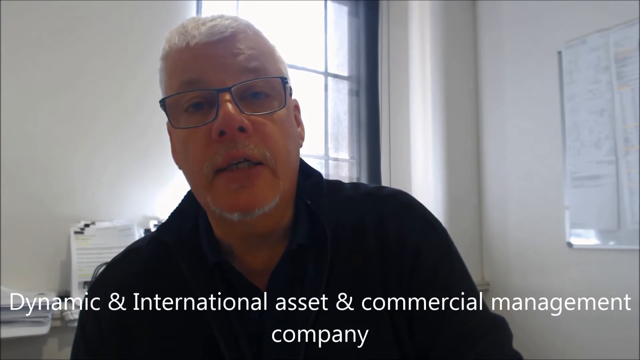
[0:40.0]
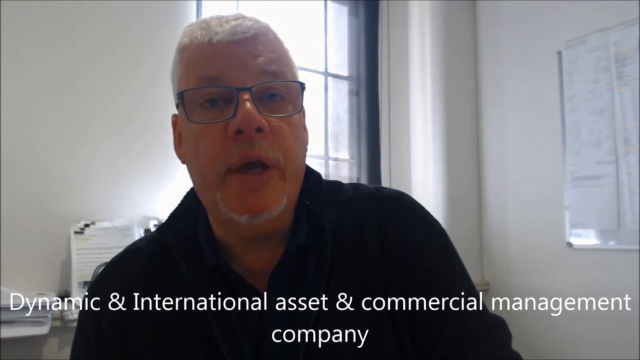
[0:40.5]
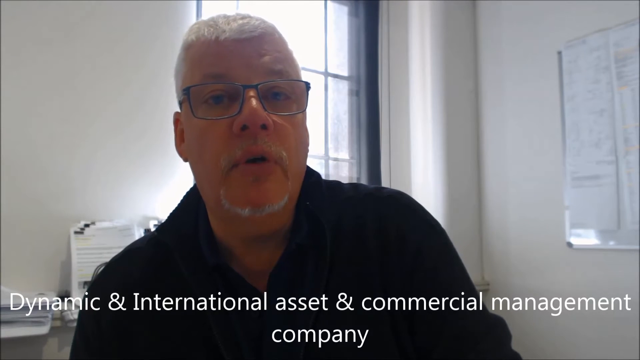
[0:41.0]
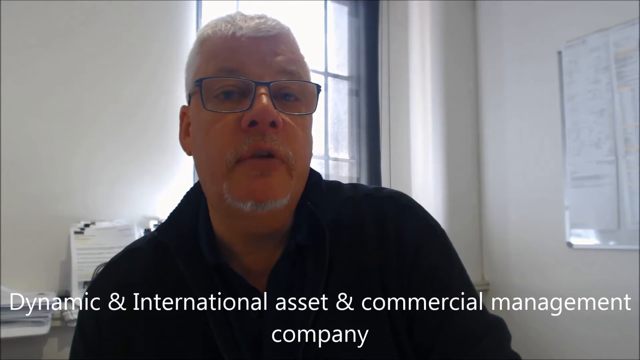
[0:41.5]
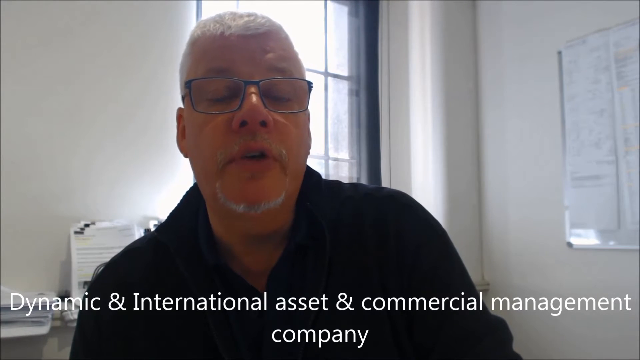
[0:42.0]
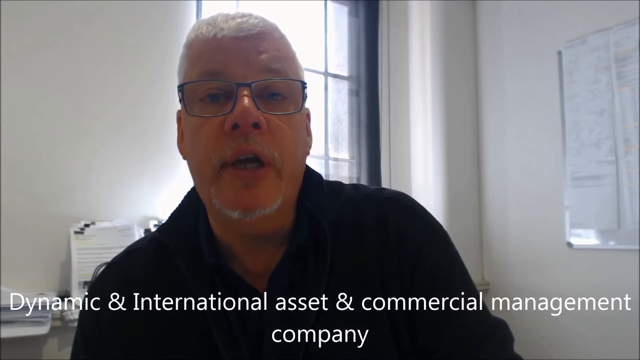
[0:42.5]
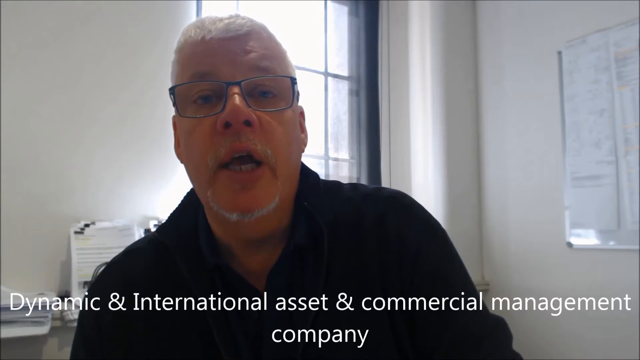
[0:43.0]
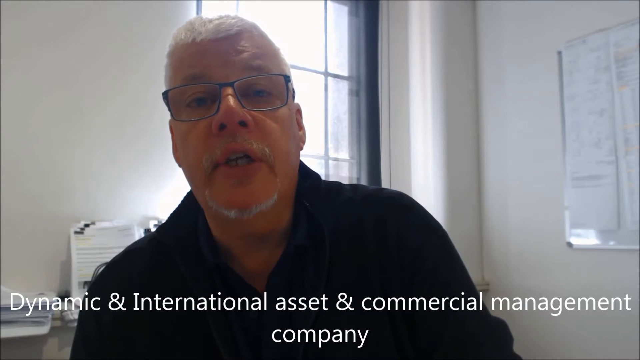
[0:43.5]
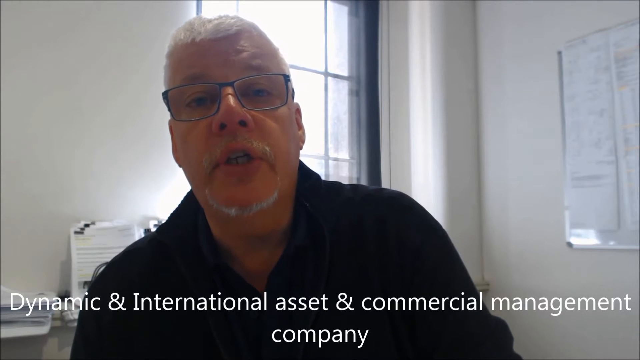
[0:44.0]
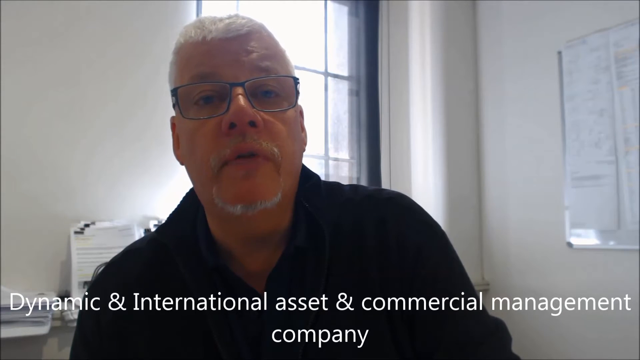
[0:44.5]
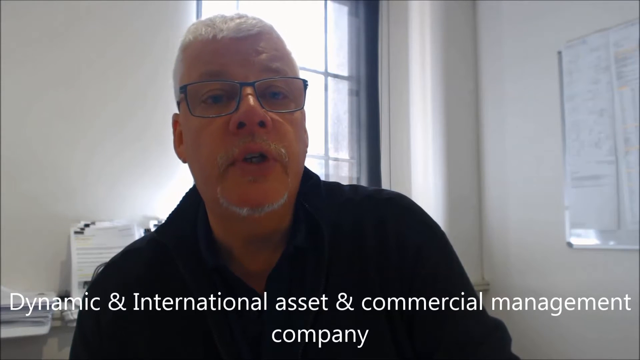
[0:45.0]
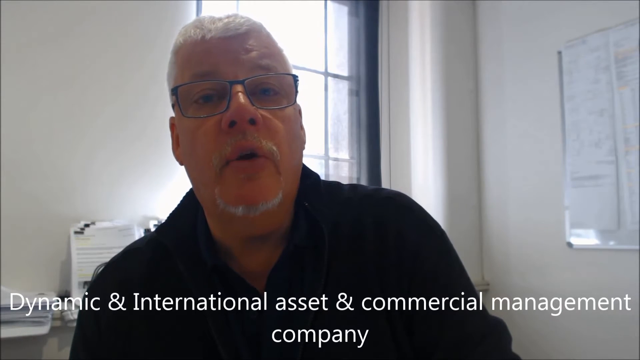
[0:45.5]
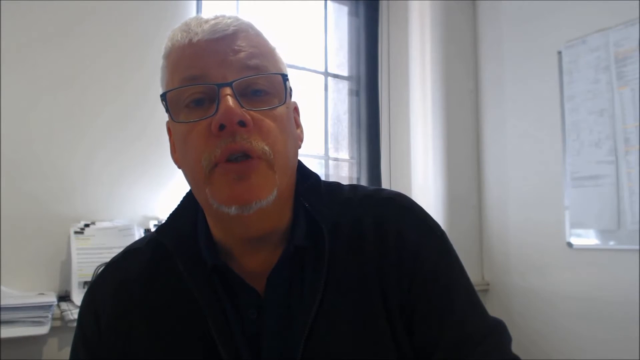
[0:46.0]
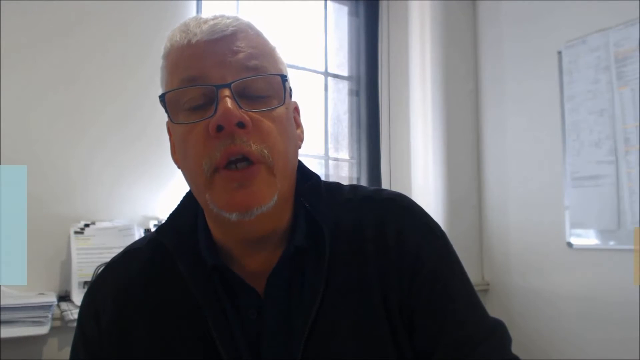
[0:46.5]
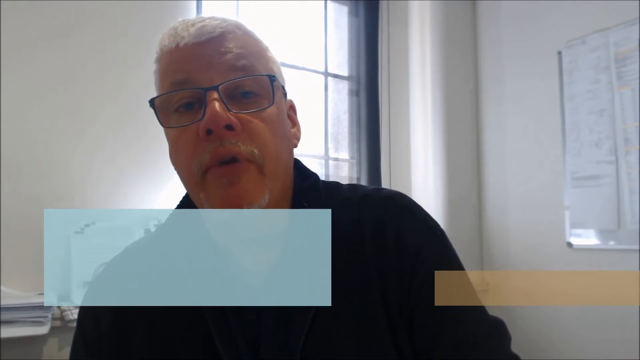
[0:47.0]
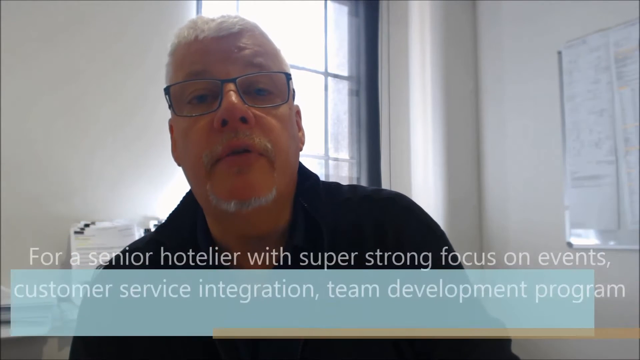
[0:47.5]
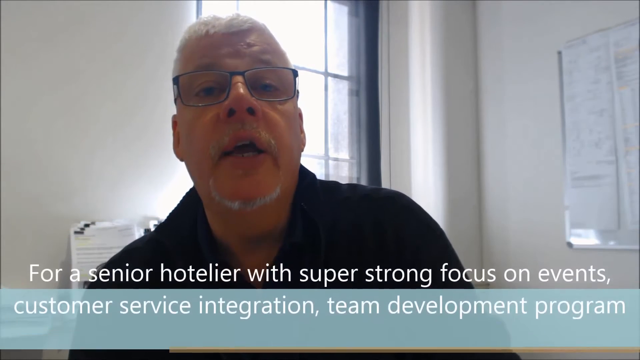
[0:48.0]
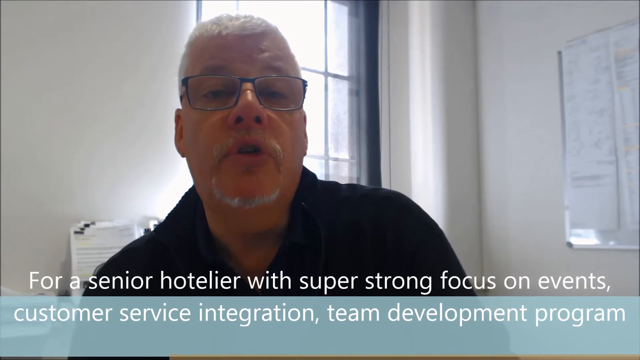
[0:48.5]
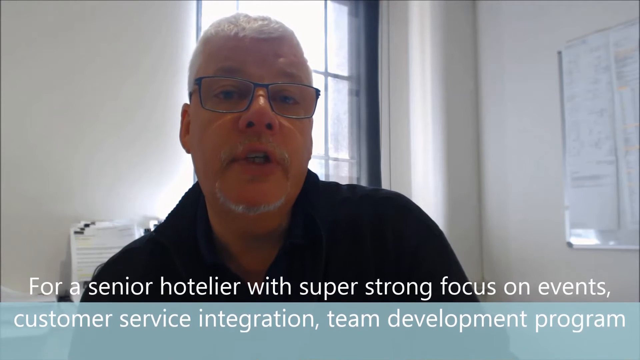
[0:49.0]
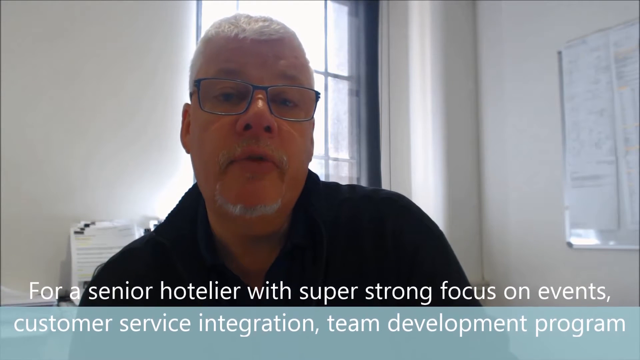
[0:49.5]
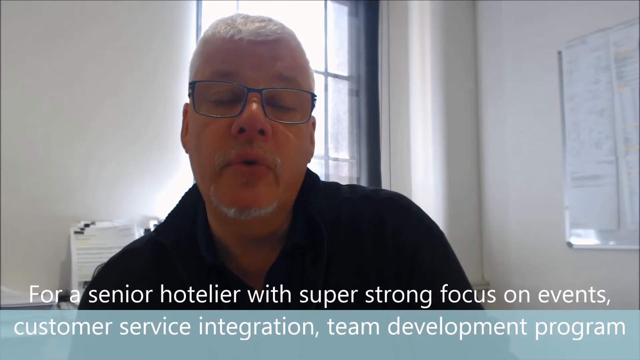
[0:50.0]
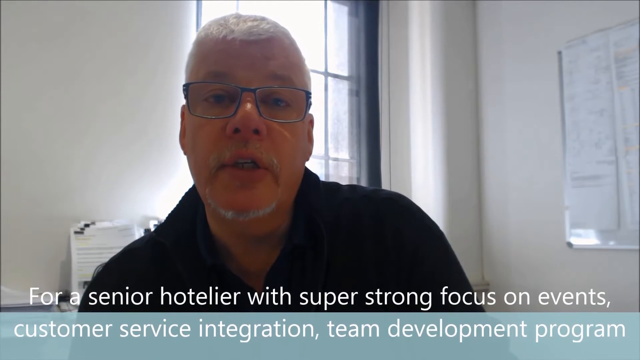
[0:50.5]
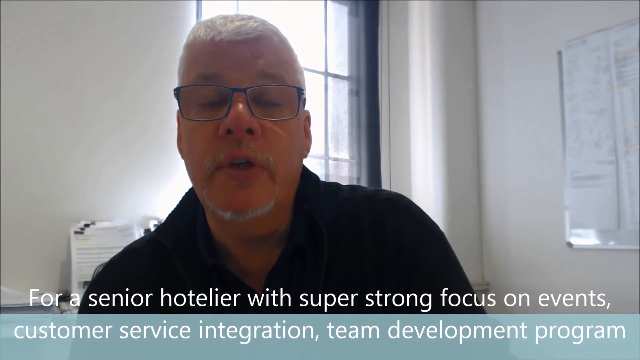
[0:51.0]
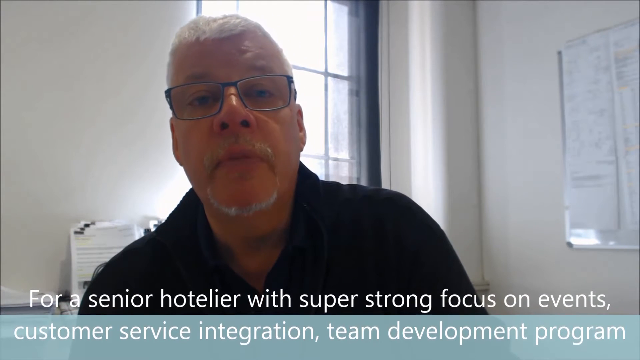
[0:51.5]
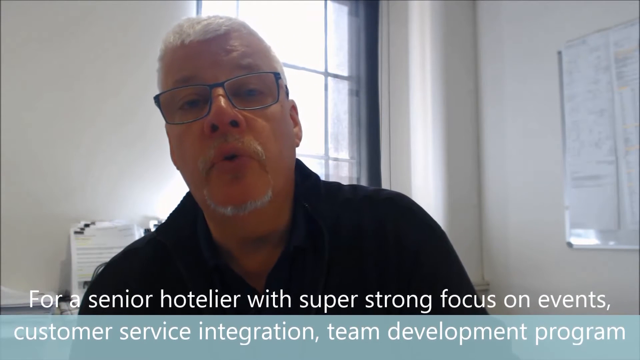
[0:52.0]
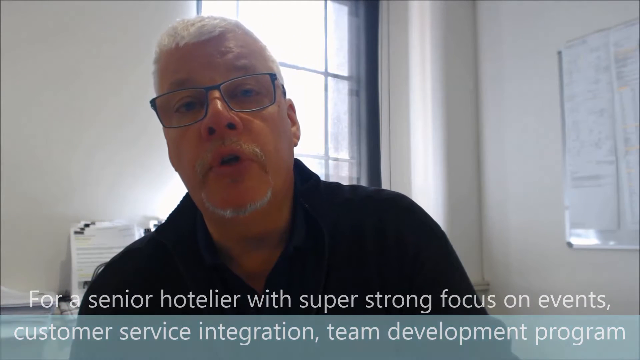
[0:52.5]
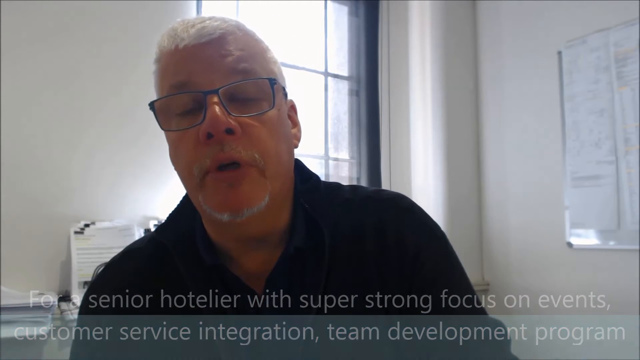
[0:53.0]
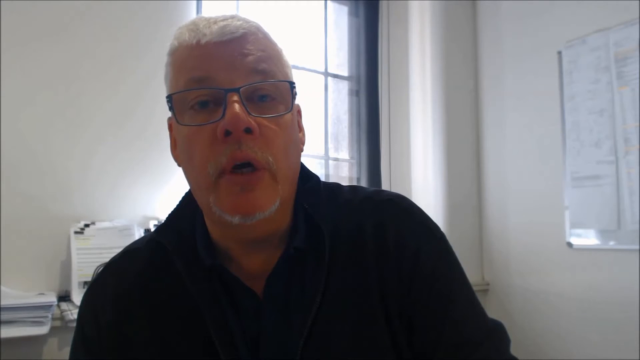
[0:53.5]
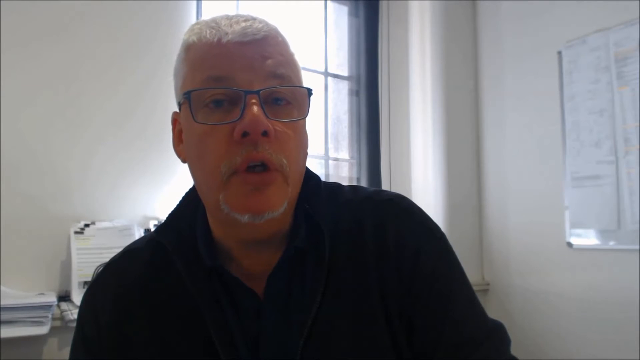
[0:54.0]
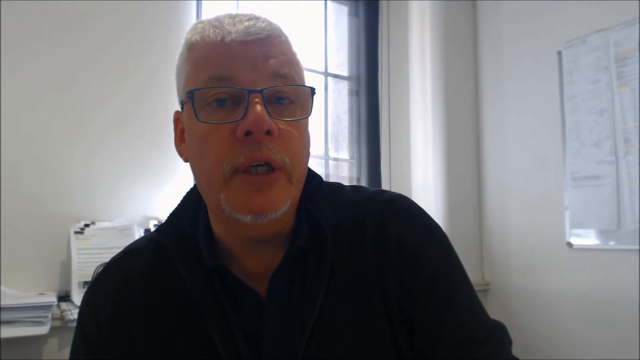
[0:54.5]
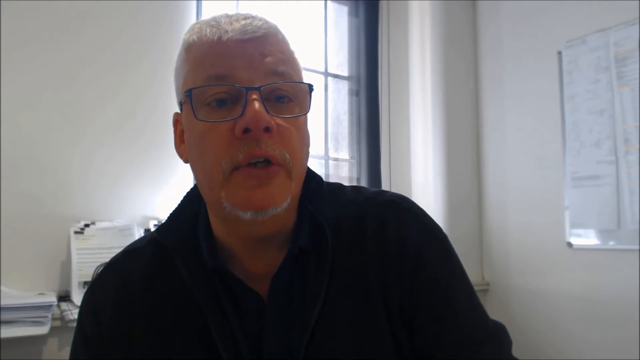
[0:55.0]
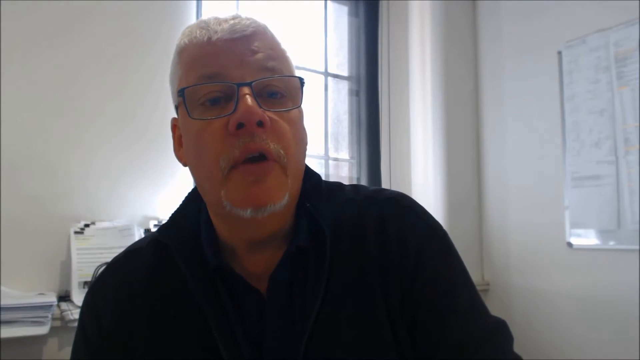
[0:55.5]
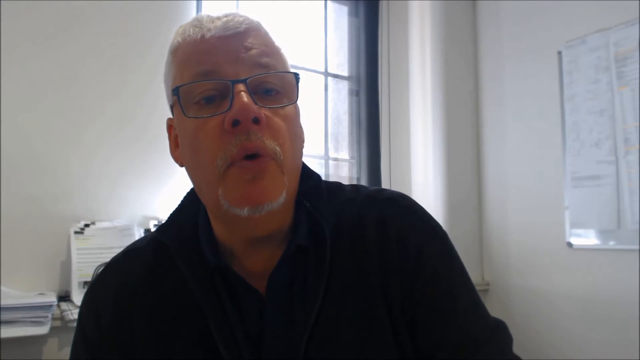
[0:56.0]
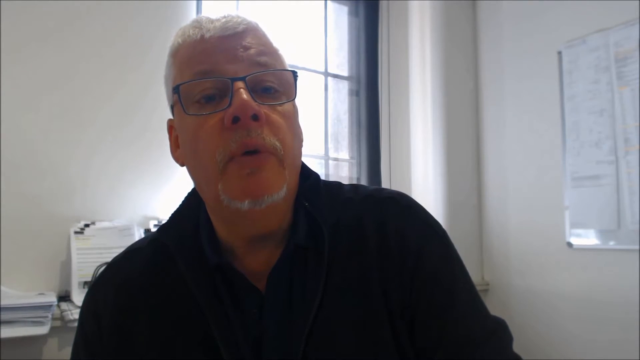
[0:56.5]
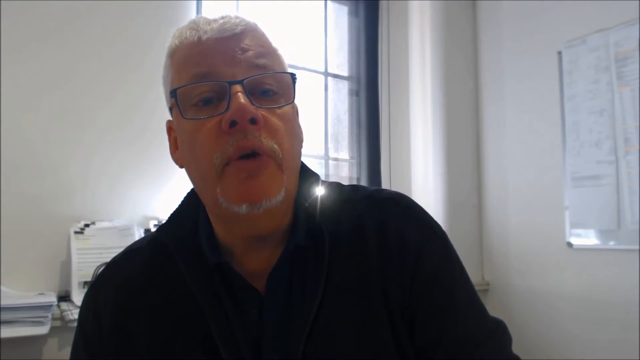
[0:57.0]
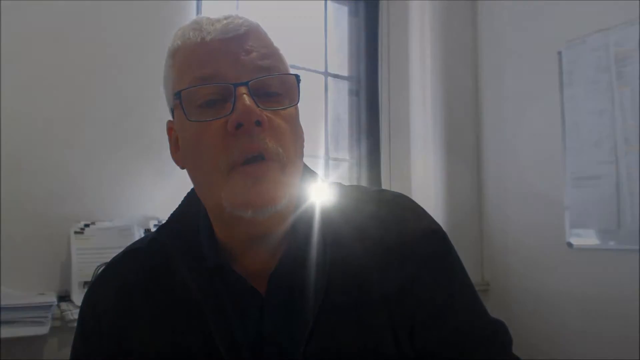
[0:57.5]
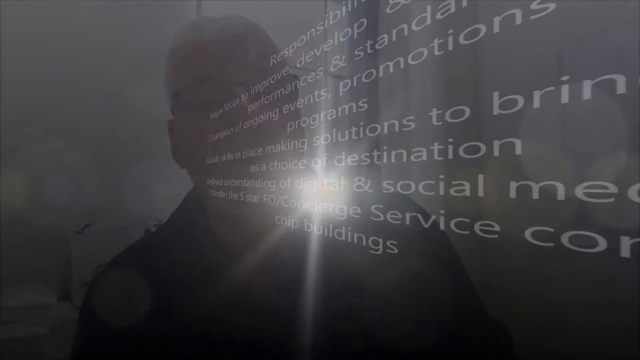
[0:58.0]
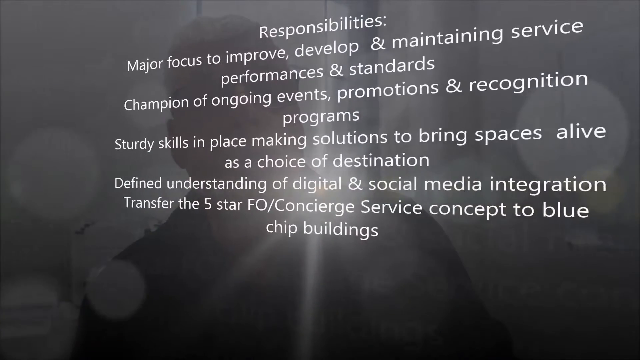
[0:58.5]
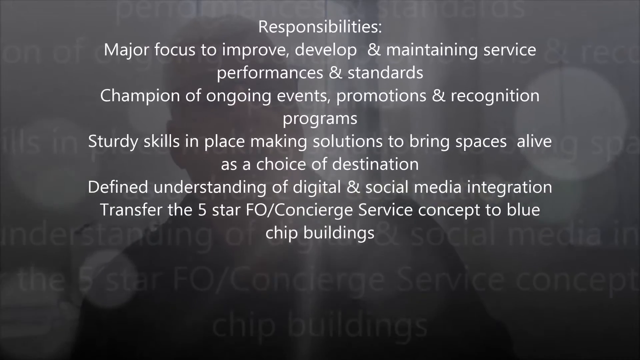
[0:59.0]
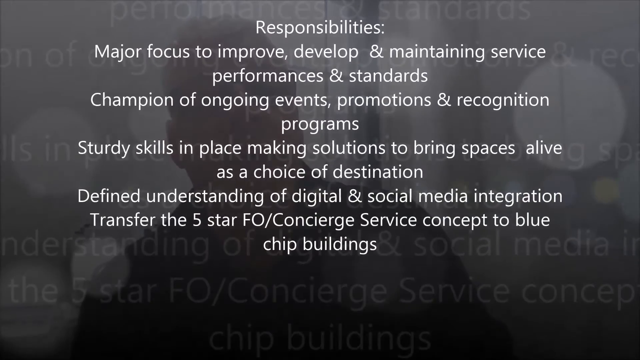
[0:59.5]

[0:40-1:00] White text appears on the screen while the man talks, mentioning an "asset and commercial management company." More white text then follows describing what is being looked for in a position at the company, so the video seems to be some kind of job posting.